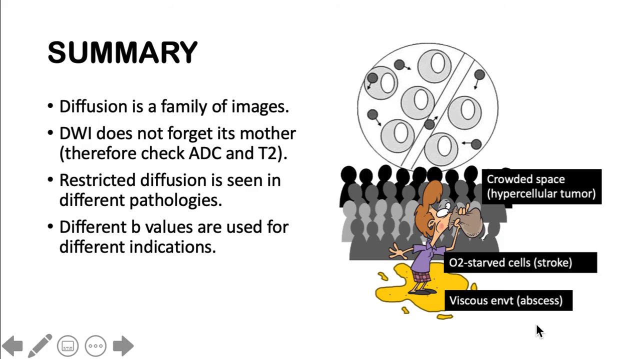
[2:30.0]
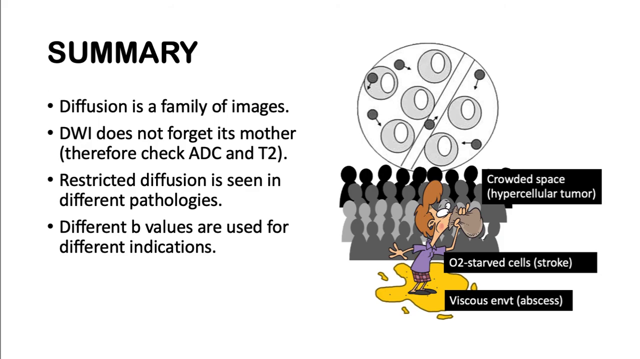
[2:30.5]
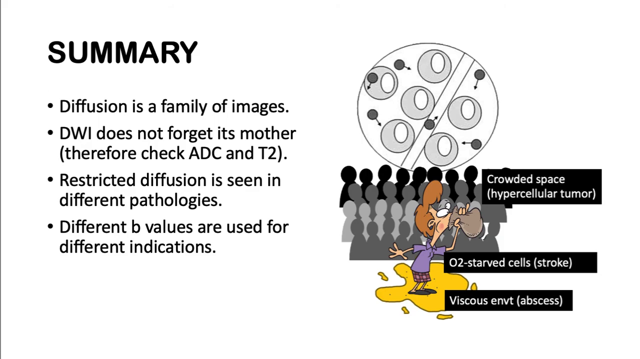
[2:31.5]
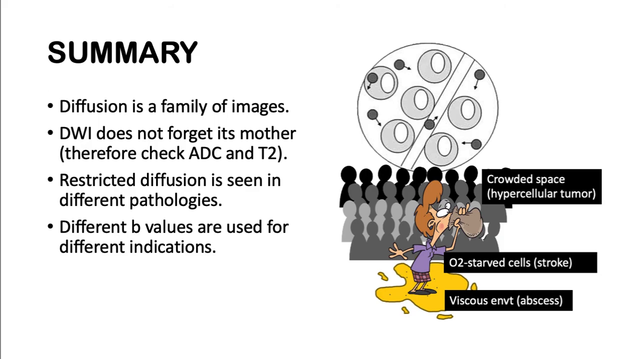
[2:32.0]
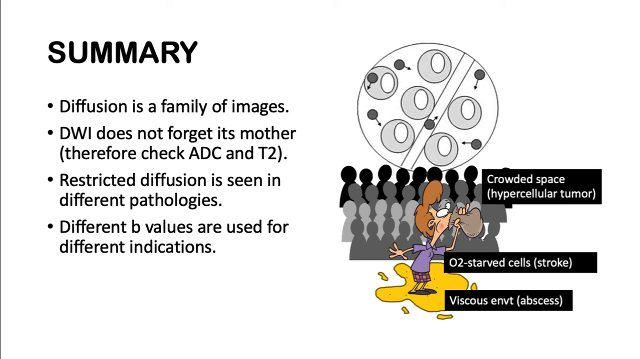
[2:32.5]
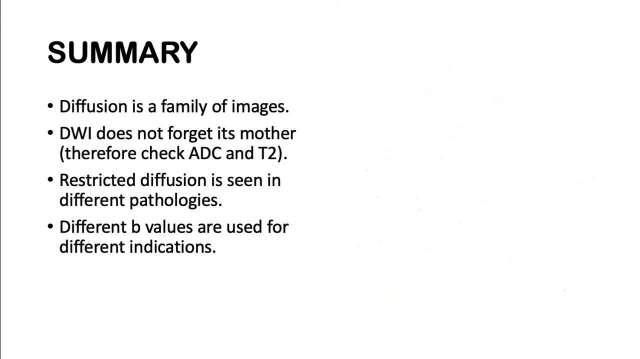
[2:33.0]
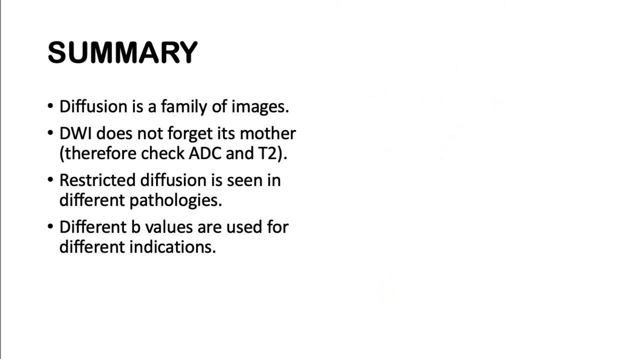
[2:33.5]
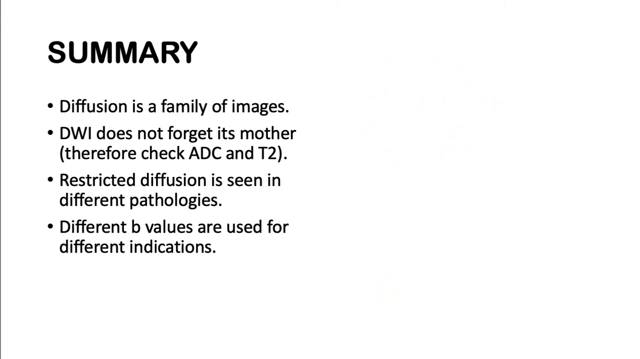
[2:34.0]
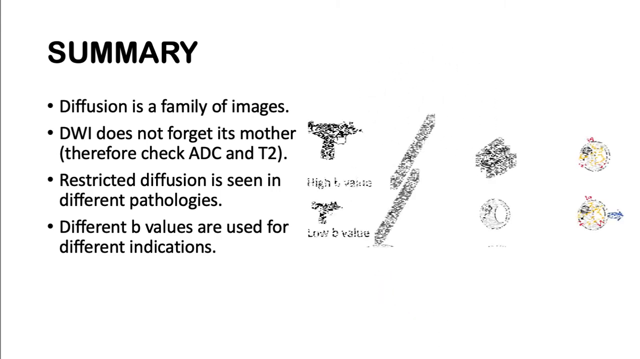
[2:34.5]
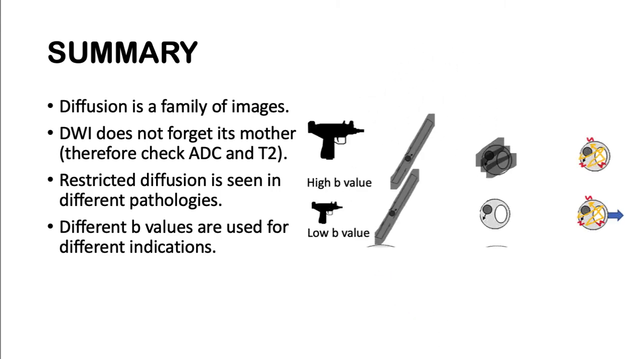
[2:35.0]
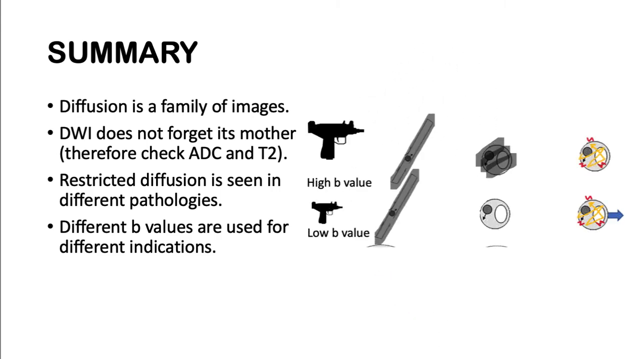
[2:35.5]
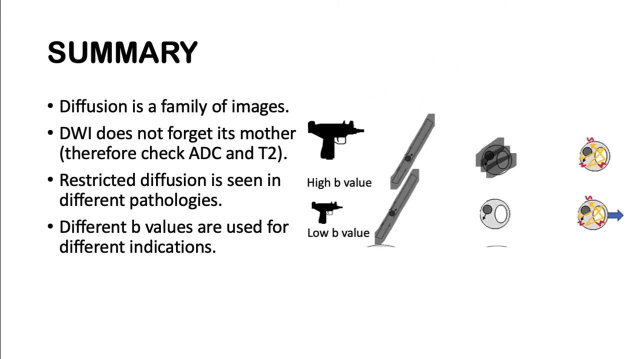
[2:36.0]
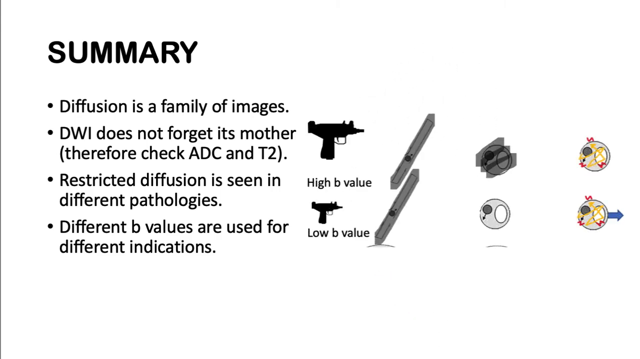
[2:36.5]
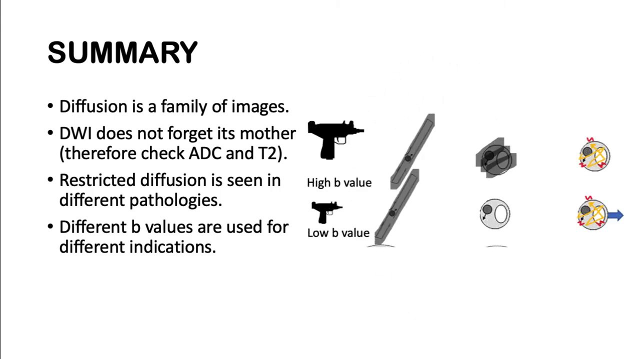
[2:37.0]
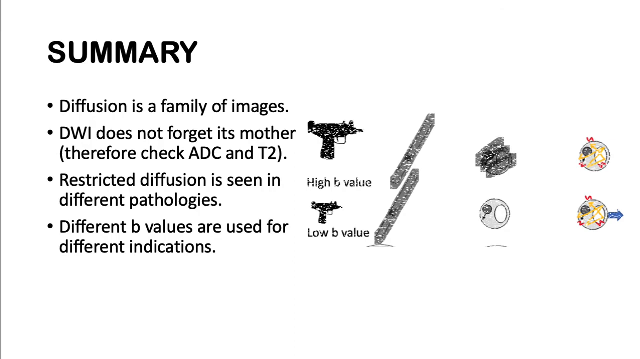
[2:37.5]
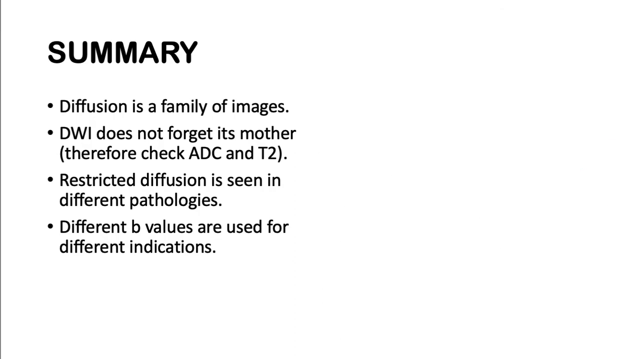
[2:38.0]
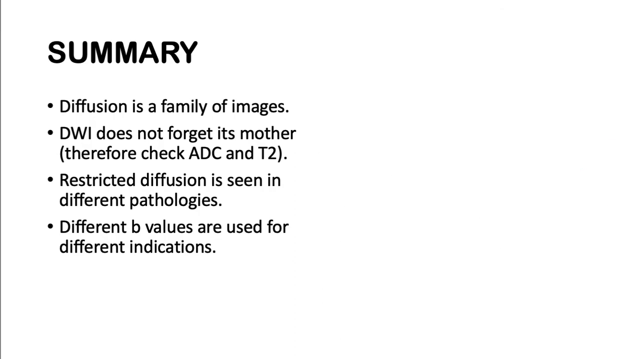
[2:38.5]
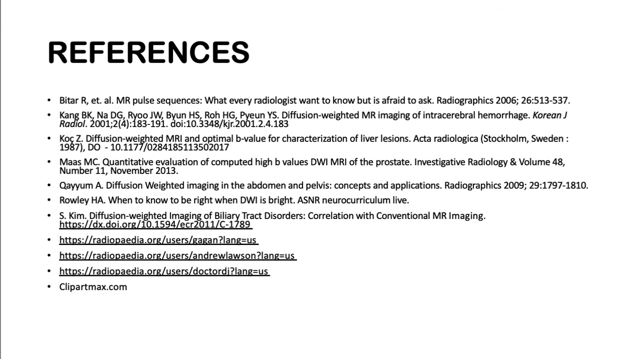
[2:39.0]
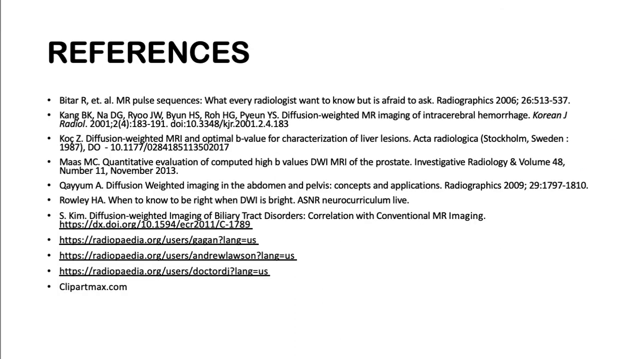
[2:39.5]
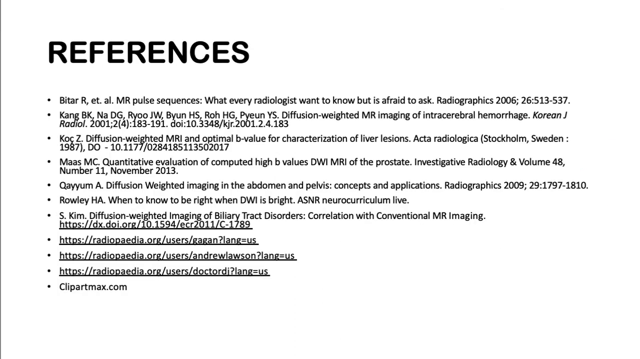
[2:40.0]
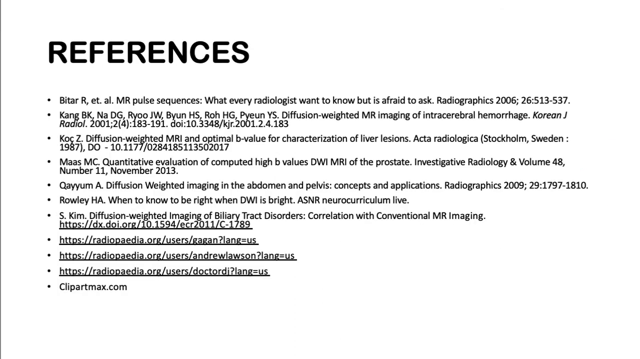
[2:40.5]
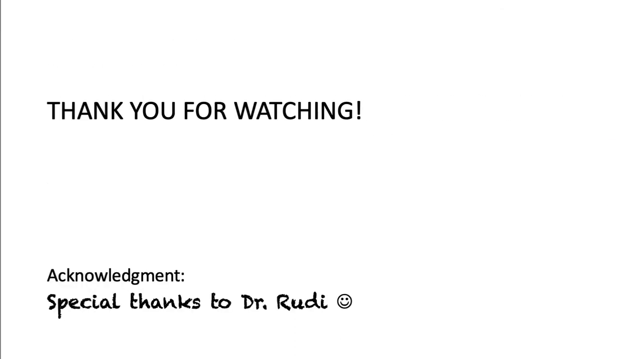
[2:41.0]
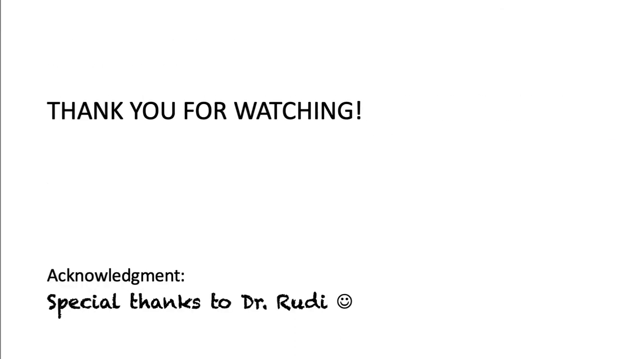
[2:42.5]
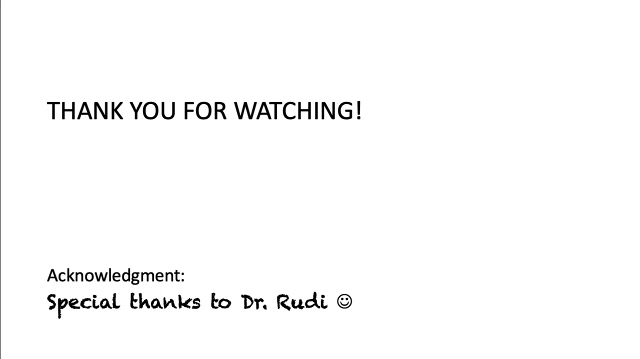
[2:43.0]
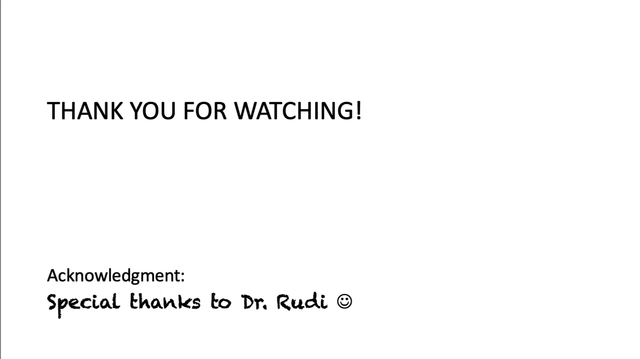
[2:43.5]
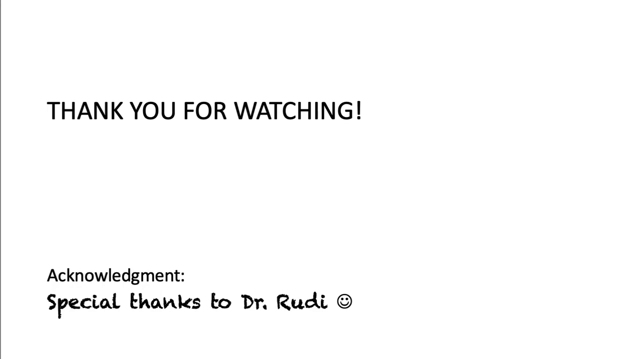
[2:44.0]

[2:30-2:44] The word "summary" is written in black capital lettering in the upper left-hand corner of the screen. Below it are bullet points reading "diffusion is a family of images," "DWI does not forget its mother. Therefore, check ABC and T2," "restricted diffusion is seen in different pathologies," and "different B values are used for different indications." Several more labels read "crowded space," "hypercellular tumor," "O2-starved cells," "stroke," "viscous," "ENBT" and "abscess." Then the words "high B value" and "low B value" appear with a couple of different icons.